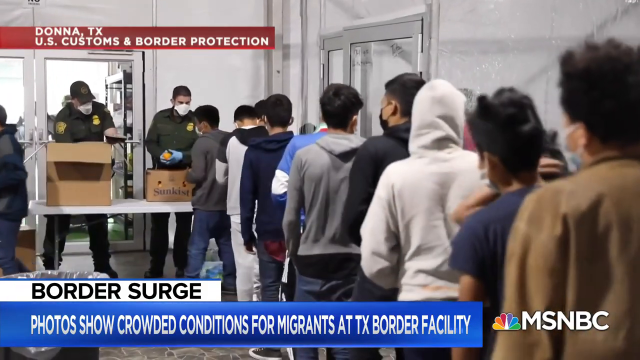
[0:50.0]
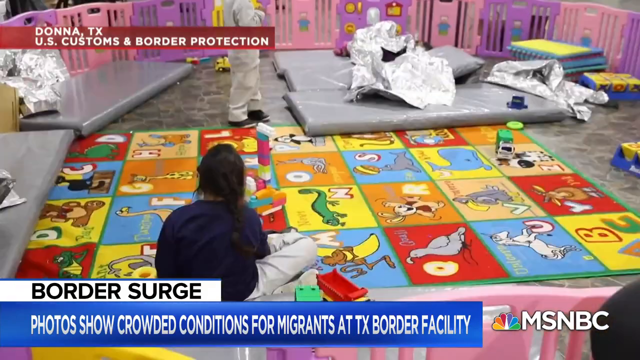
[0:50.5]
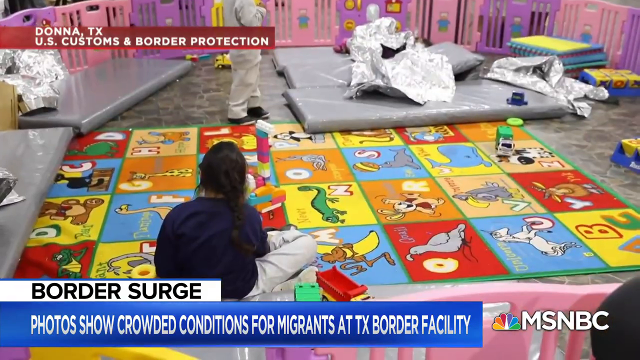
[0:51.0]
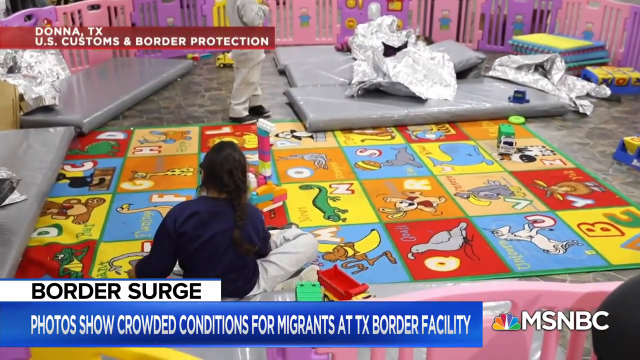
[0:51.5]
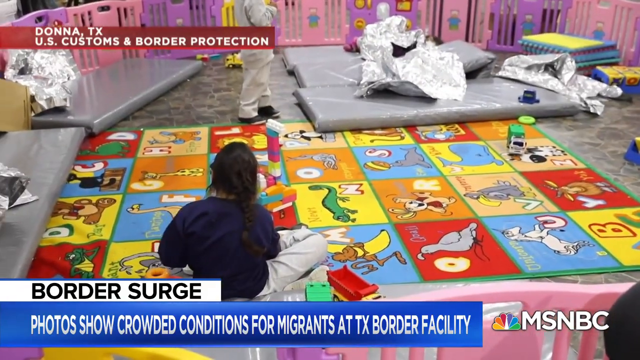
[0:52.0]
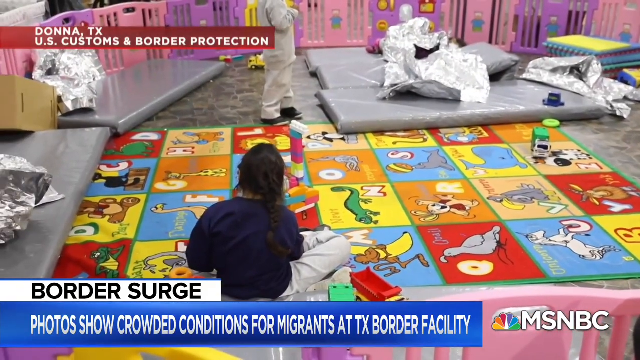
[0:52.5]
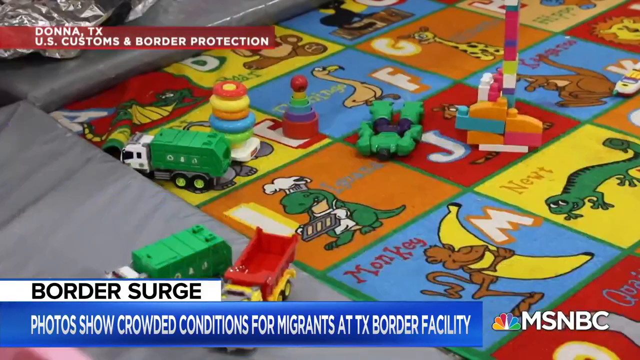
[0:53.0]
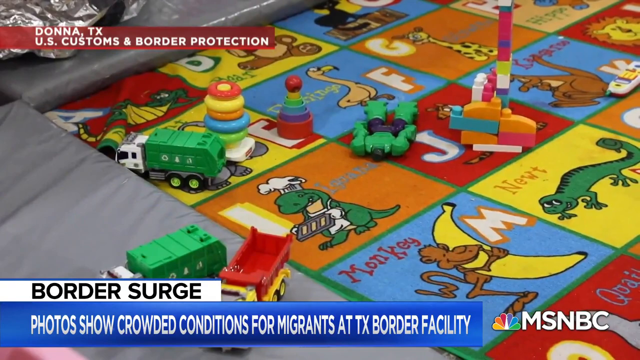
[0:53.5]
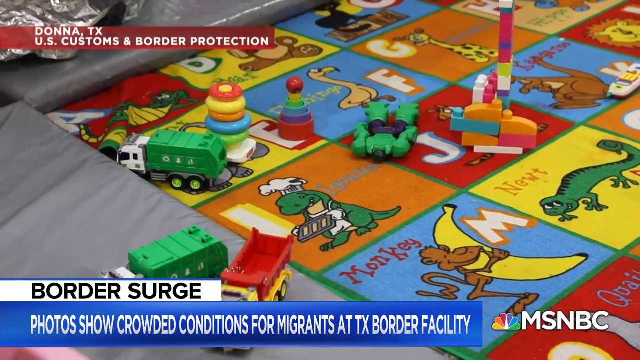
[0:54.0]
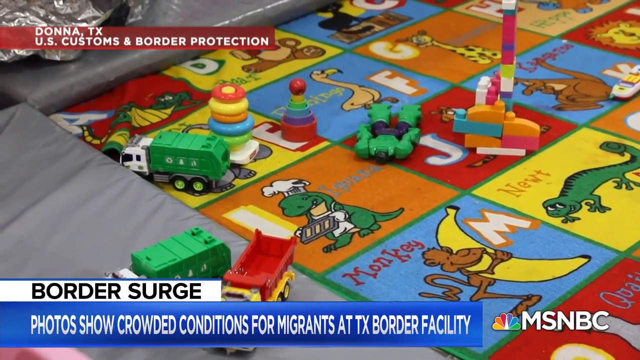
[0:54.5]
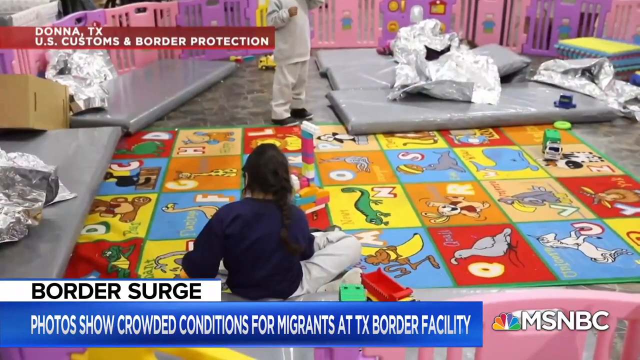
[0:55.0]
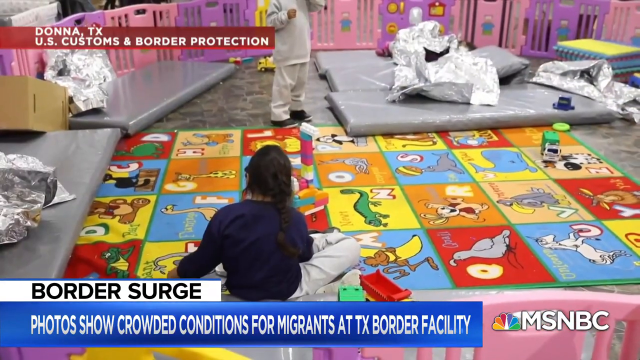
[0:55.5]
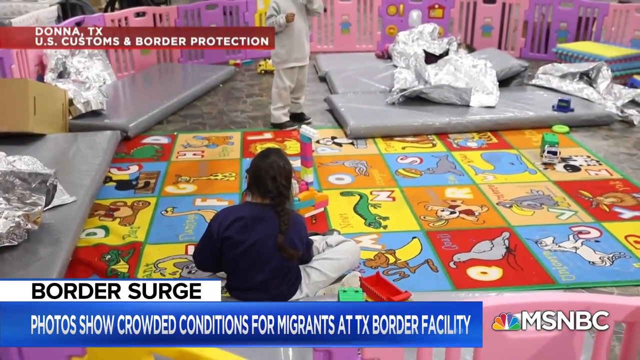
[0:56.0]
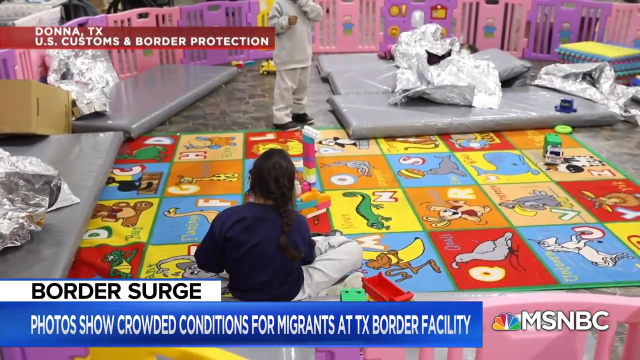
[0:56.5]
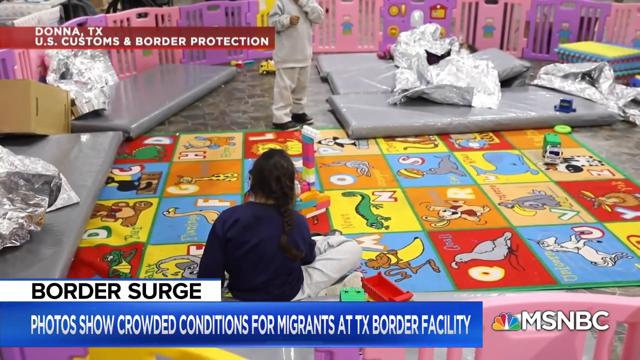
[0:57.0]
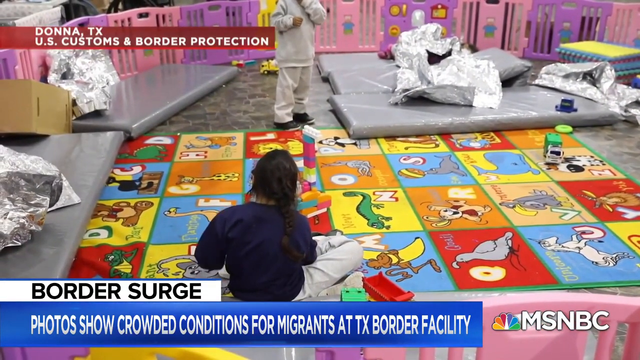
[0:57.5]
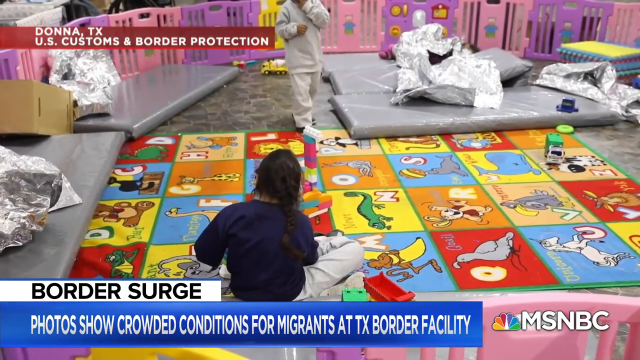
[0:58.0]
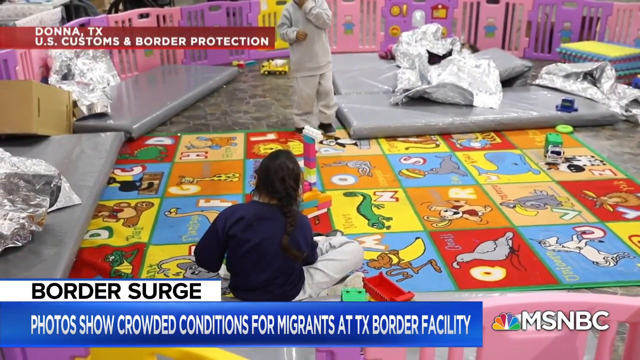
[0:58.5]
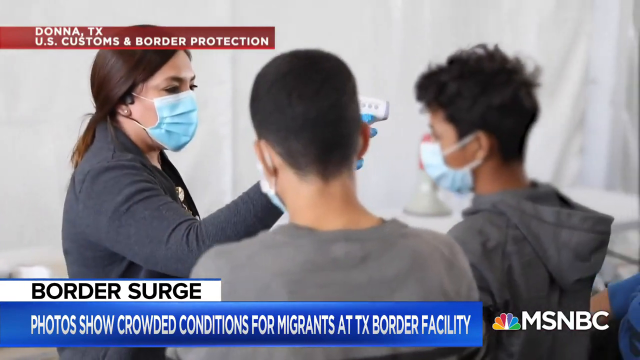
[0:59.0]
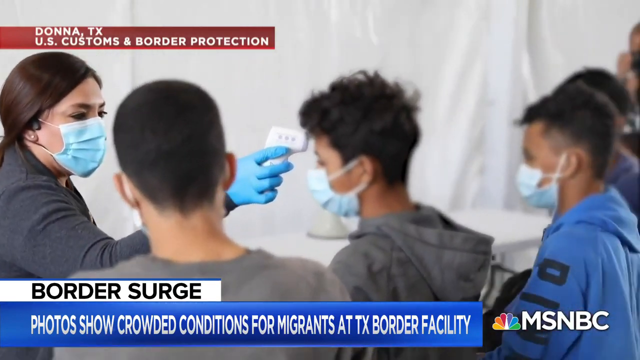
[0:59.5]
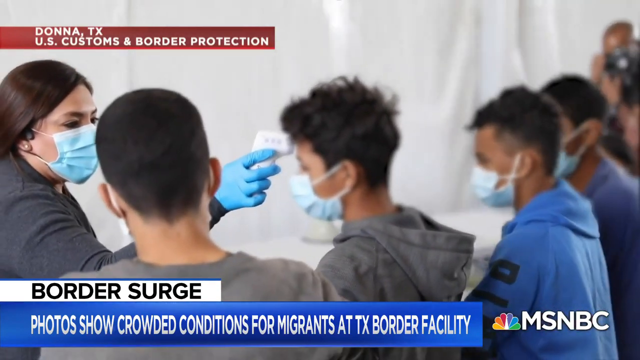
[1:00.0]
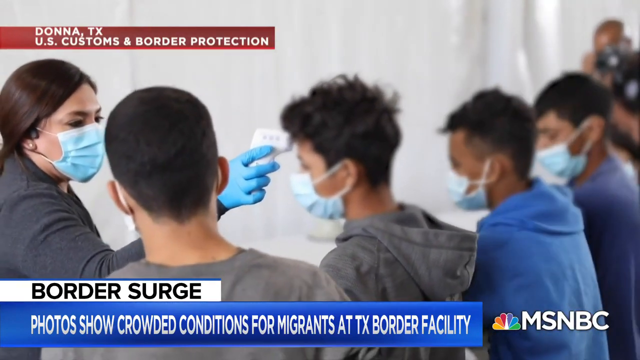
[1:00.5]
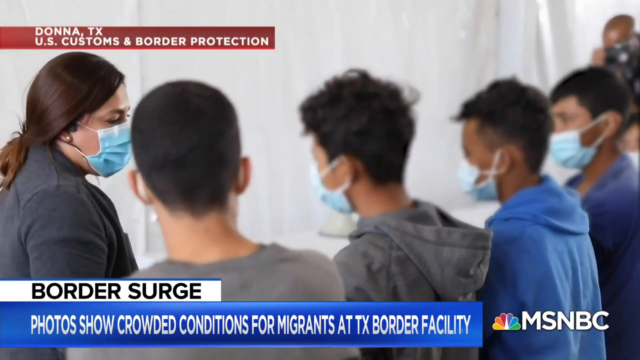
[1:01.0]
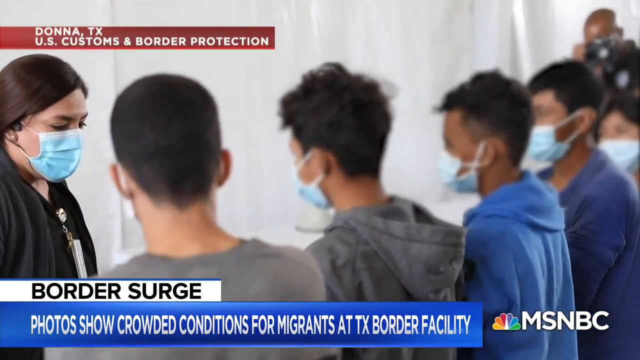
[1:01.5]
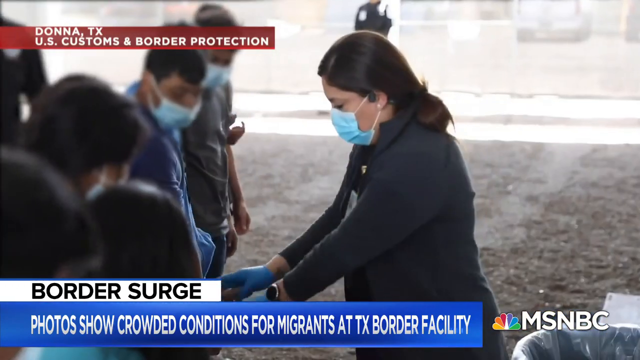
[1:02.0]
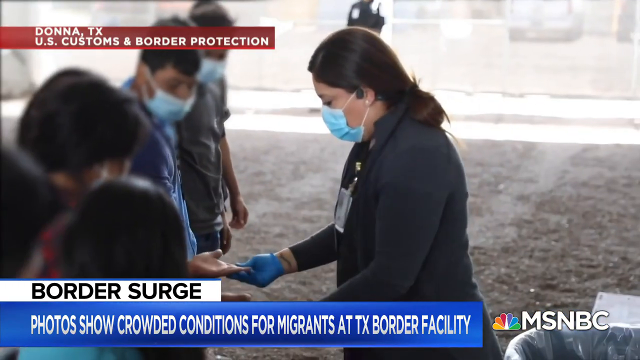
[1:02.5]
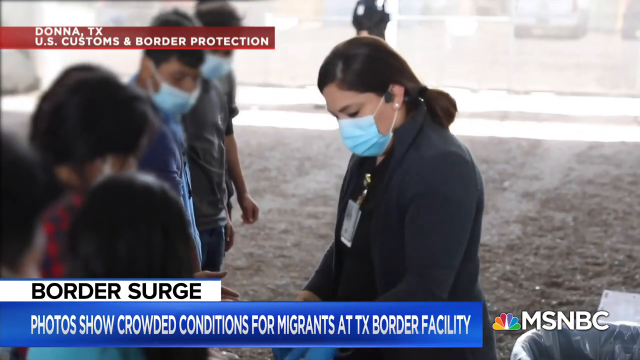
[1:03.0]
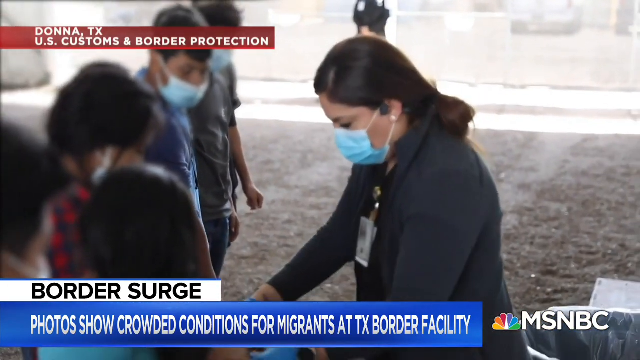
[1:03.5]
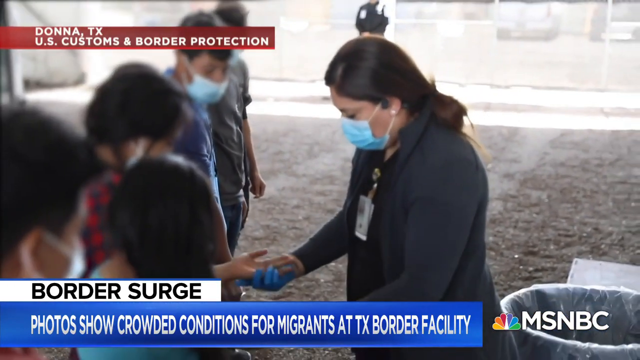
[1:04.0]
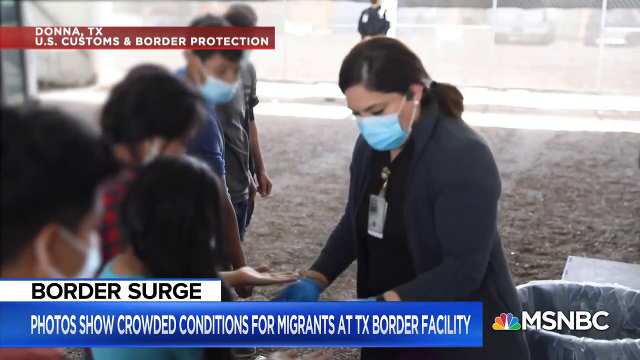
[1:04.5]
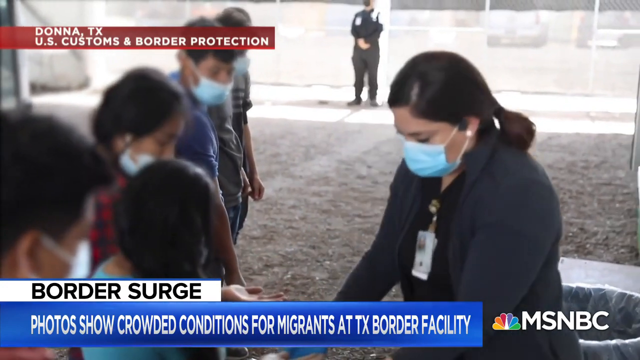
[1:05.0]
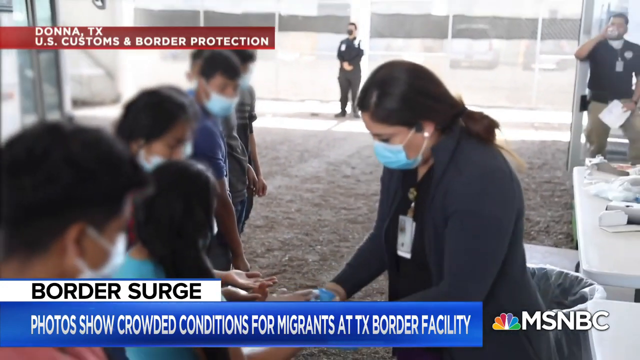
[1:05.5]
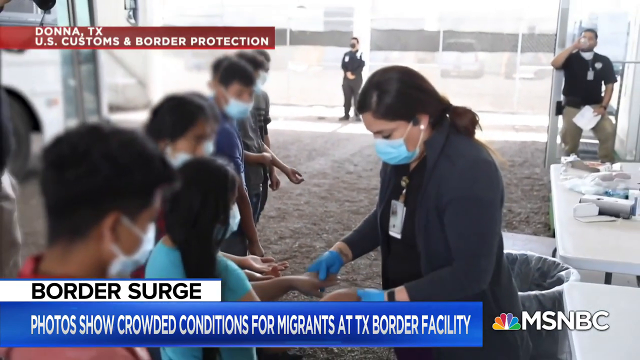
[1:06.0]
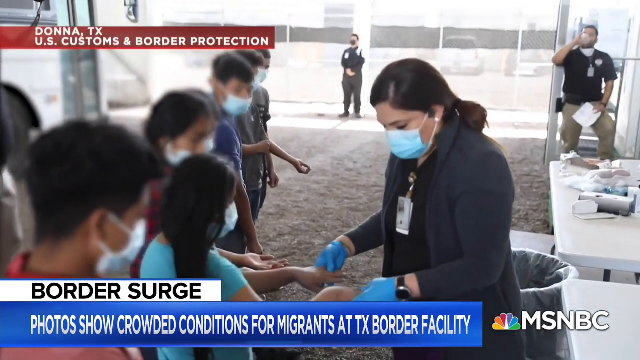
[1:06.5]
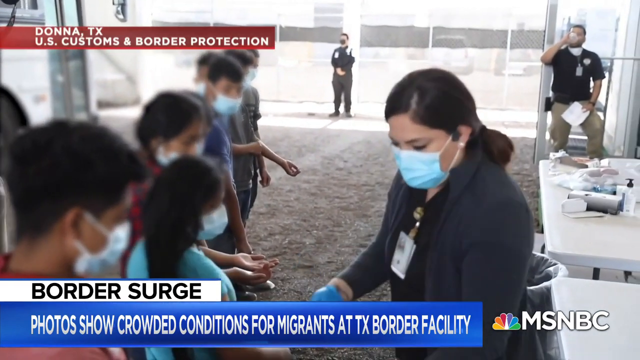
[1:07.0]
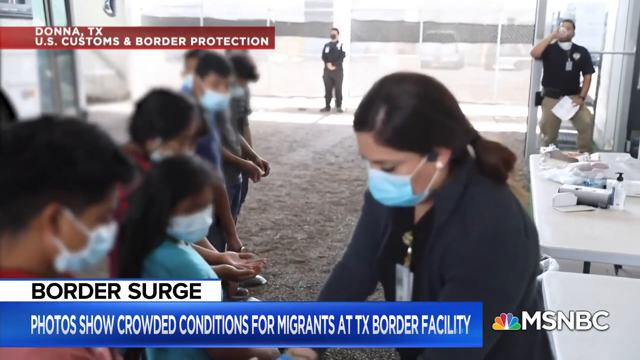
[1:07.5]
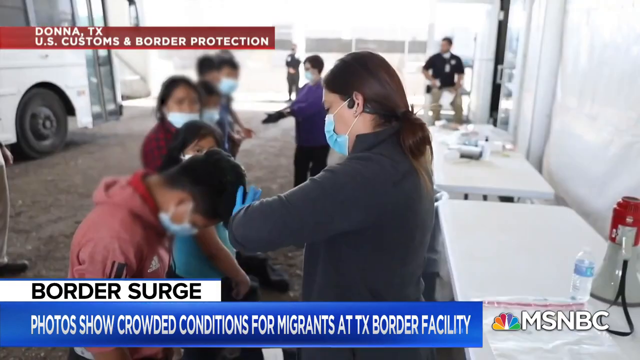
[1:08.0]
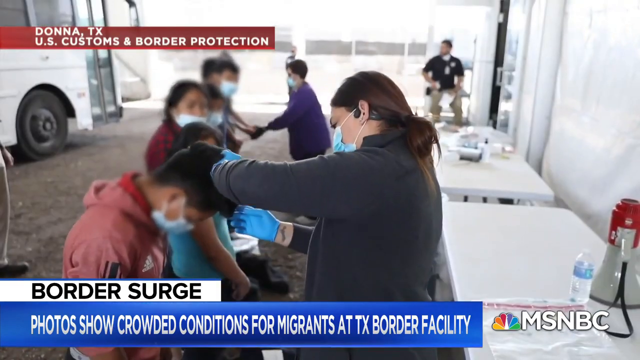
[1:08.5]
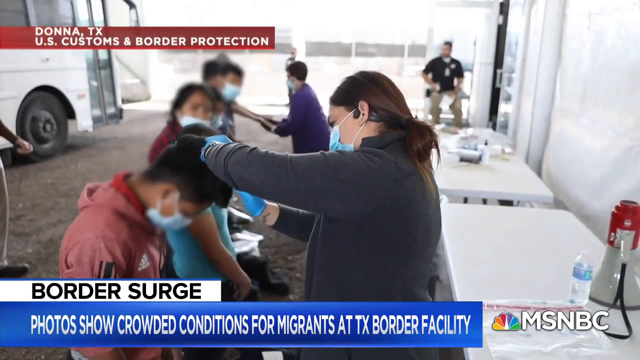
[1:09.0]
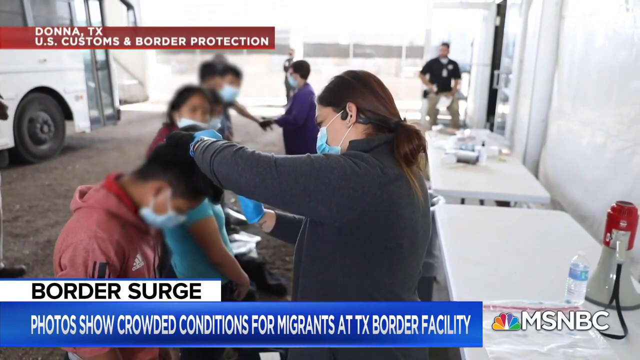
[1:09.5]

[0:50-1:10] The line of people continues approaching the border control at the front. The video then shows a play area with what looks like a carpet divided into squares, each with a different cartoon on it. A child is sitting on the carpet. The camera zooms in closer to the carpet, showing various toys. White text in the upper left corner reads "Donna, Texas, U.S. Customs and Border Protection." Another child approaches the carpet, but the video moves to a different area. Several men wearing COVID masks stand in a line, and a masked woman on the other side appears to be checking their temperatures, holding a white device up to each forehead as she goes down the line. She also looks at everyone's hands, turning them over to examine the palms, and goes through different people's hair.